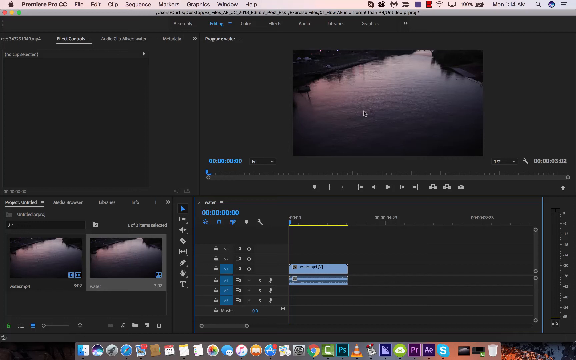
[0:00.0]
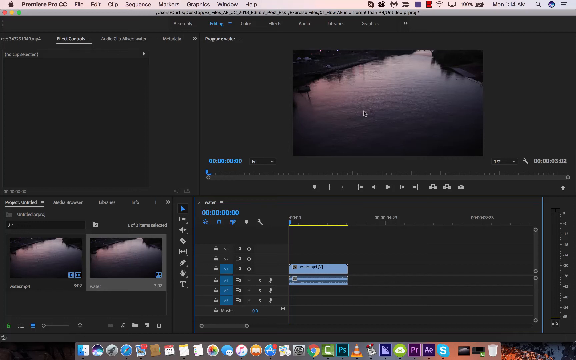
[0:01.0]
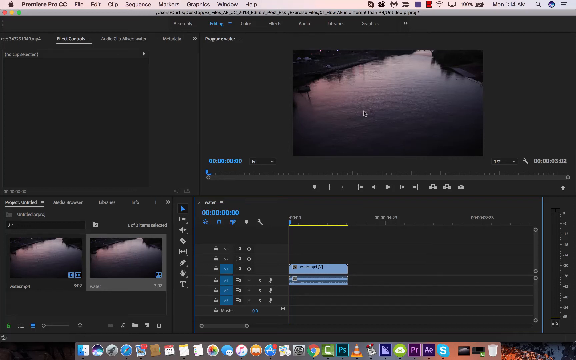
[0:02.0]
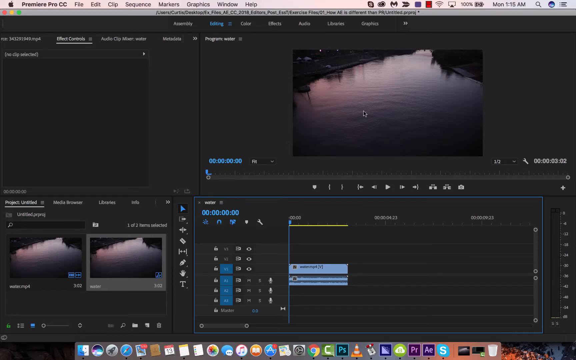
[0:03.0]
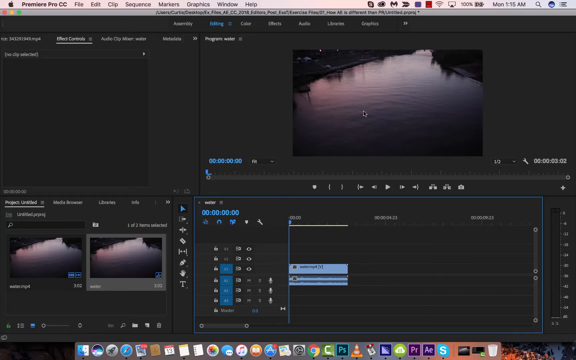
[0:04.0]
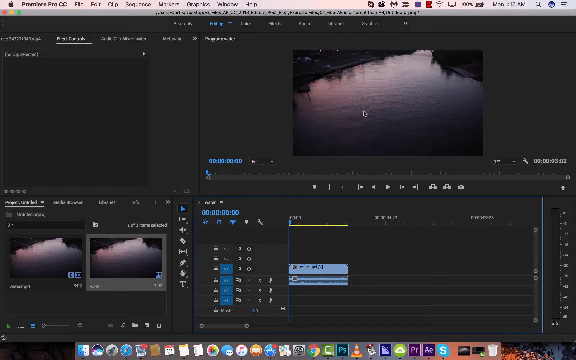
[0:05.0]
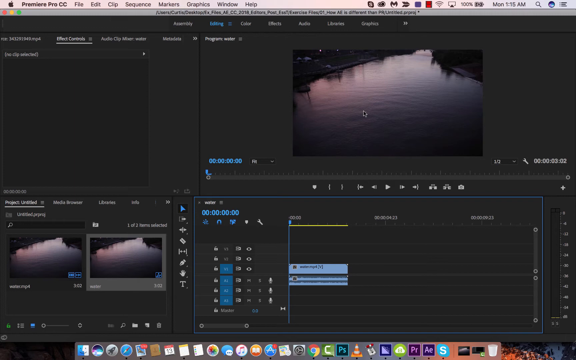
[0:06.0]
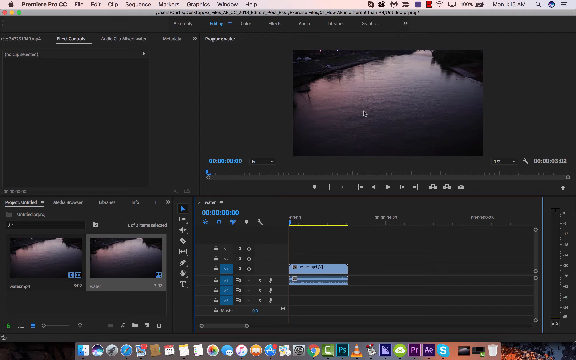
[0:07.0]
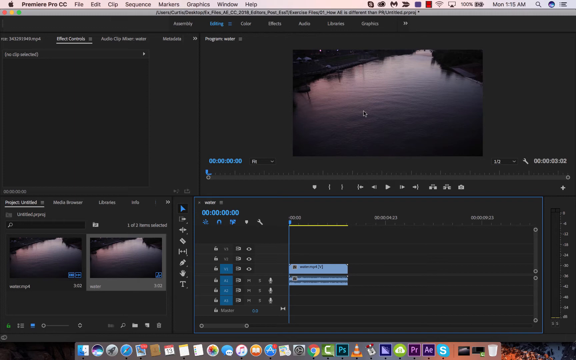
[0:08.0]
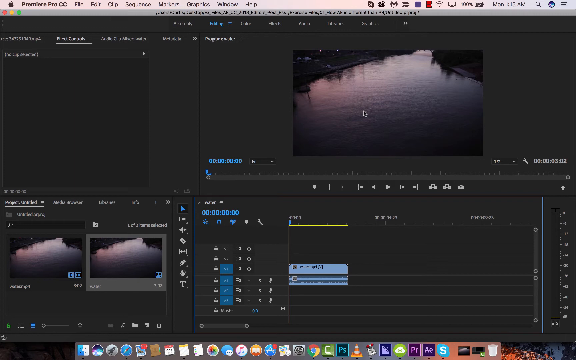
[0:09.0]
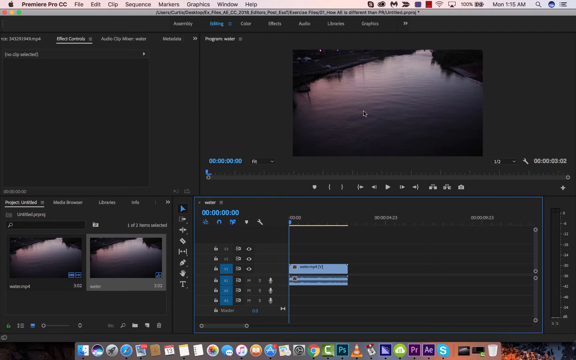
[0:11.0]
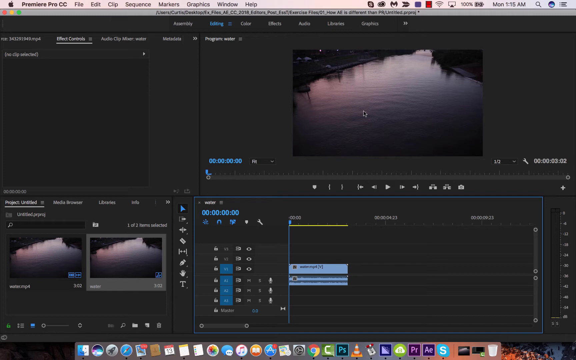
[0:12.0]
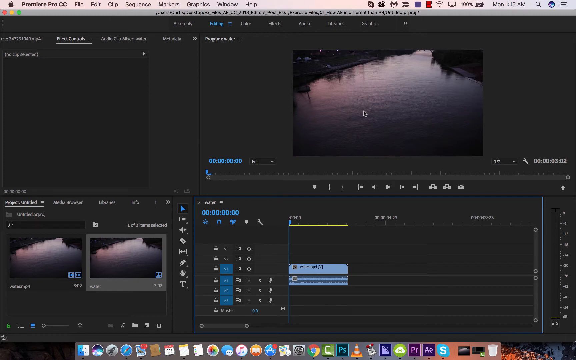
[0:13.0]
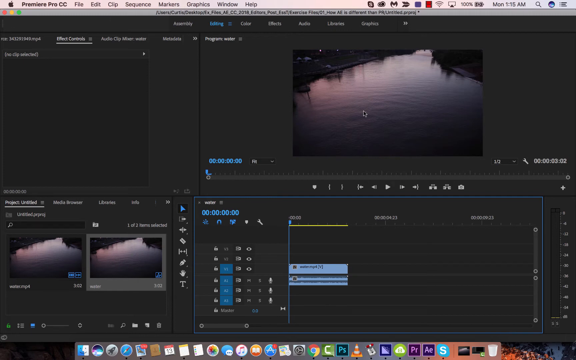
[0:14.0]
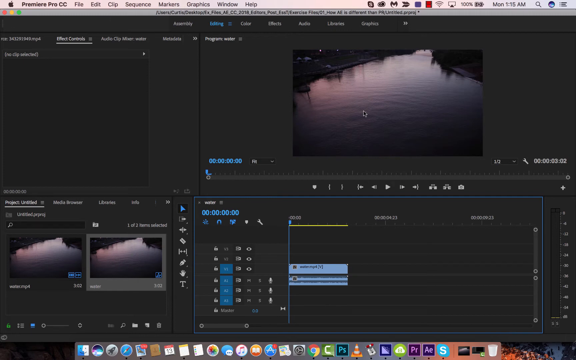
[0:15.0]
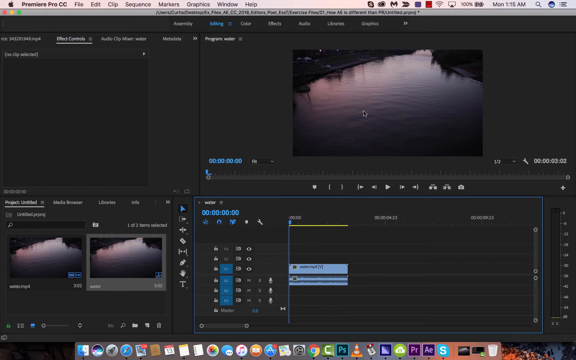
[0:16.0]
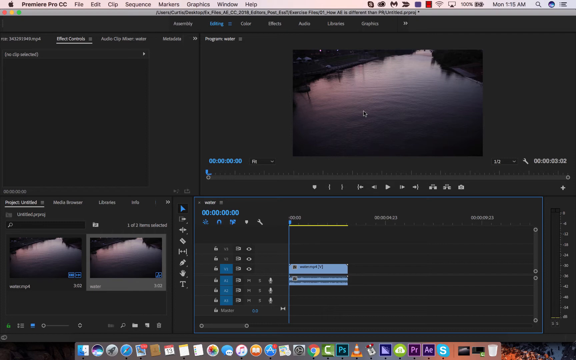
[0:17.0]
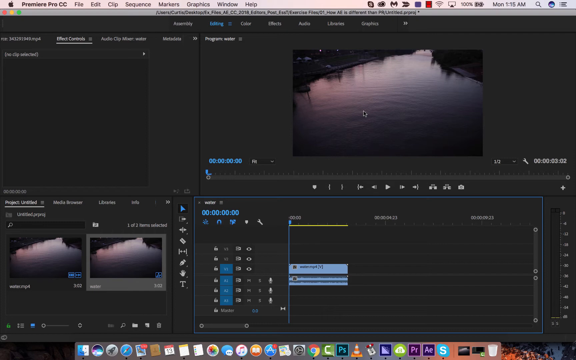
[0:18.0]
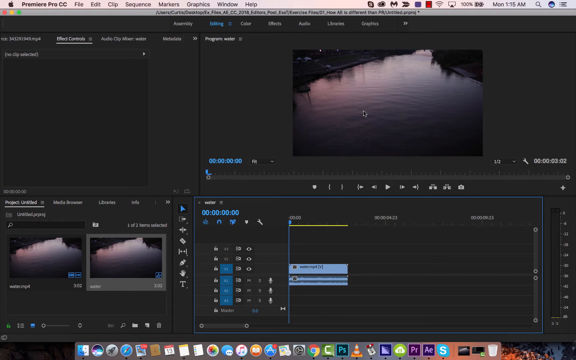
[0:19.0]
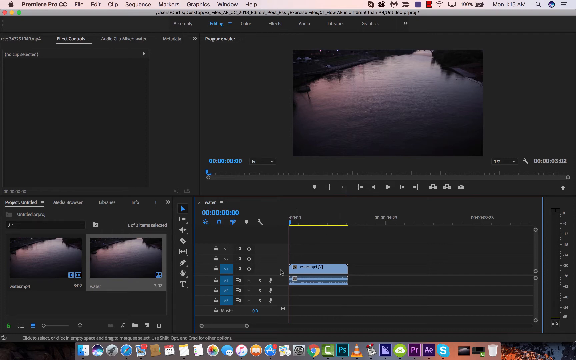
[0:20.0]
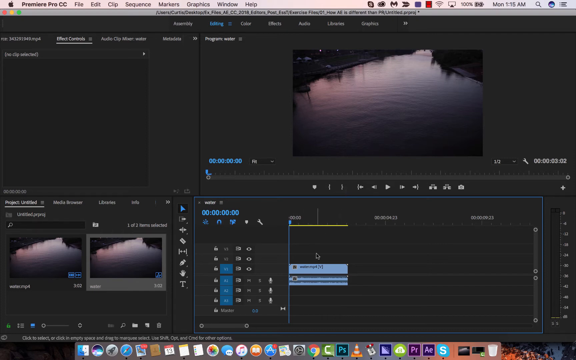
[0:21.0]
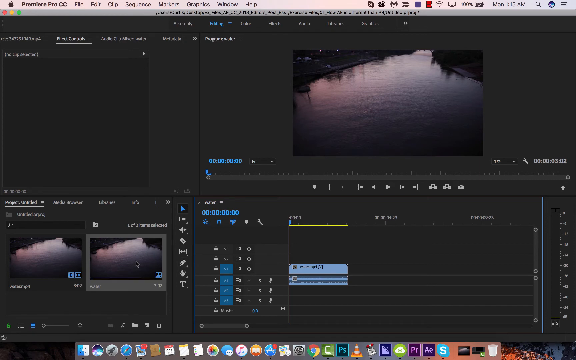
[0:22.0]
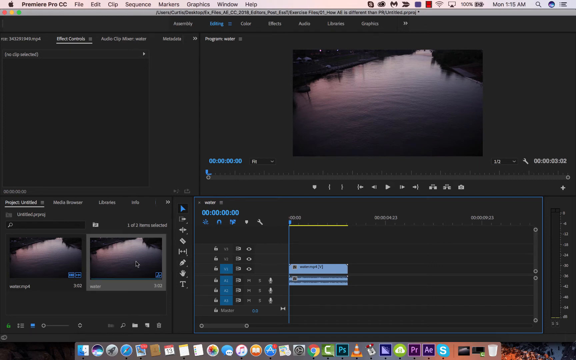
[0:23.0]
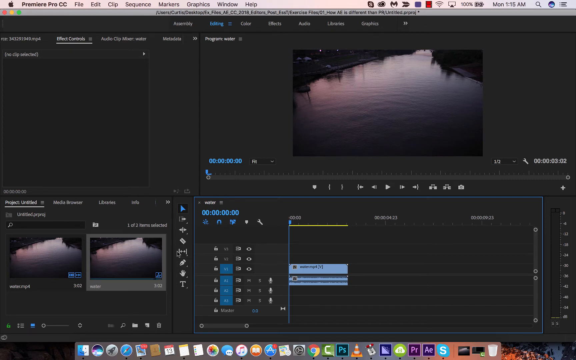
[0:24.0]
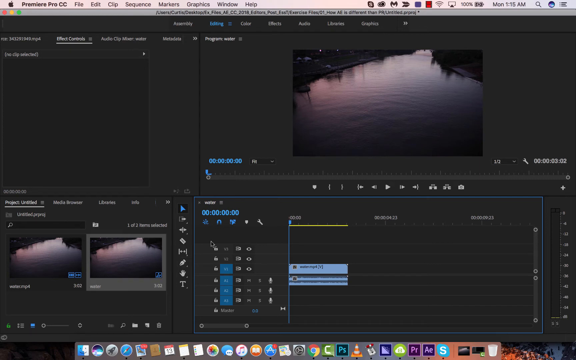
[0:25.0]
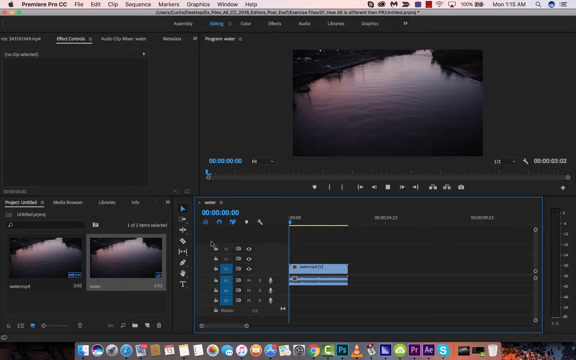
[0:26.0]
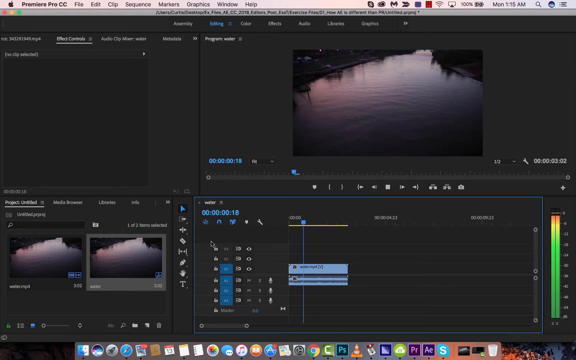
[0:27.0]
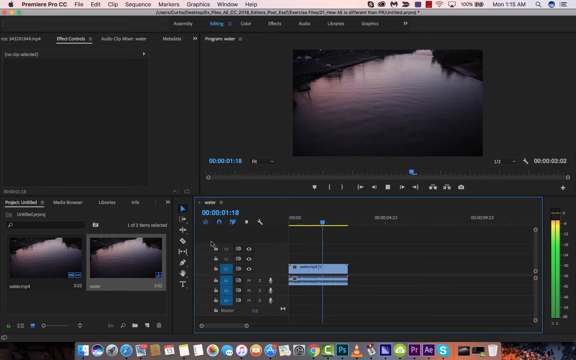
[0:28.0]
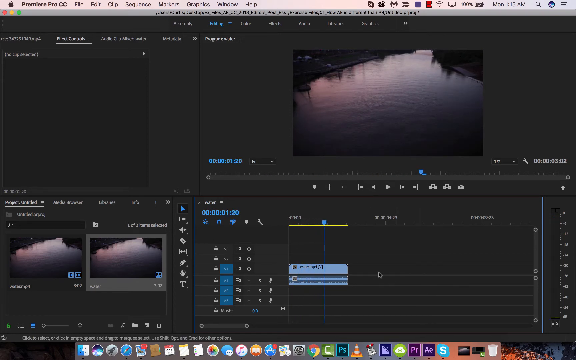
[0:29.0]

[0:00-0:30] The video frame is a little wider than it is tall. In the top left there appears to be an Apple icon, indicating a macOS desktop, and to the right of the Apple the program appears to be Premiere Pro CC. Next come the menus File, Edit, Clip, Sequence, Markers, Graphics, Window and Help. In the upper right are the date and time and some icons for what is open. Dividing the program area into six sections, three on top and three on the bottom, the top-left section is a blank space. The right two-thirds of the top area holds a picture of a river or some sort of narrow body of water. It looks very dark gray in the lower right and turns a little blue going diagonally toward the upper left, as if it is reflecting a sunrise or sunset. In the lower left the picture appears twice, probably for different editing options, and in the lower right are some blue bars running left to right.